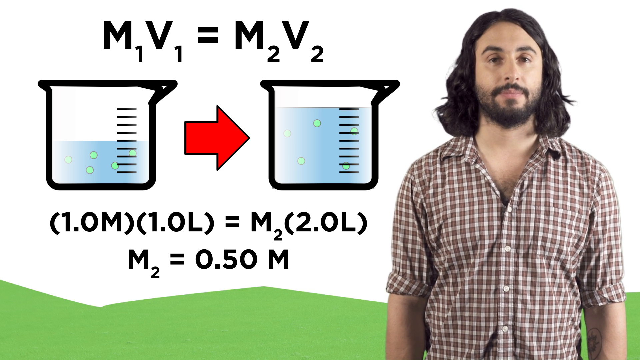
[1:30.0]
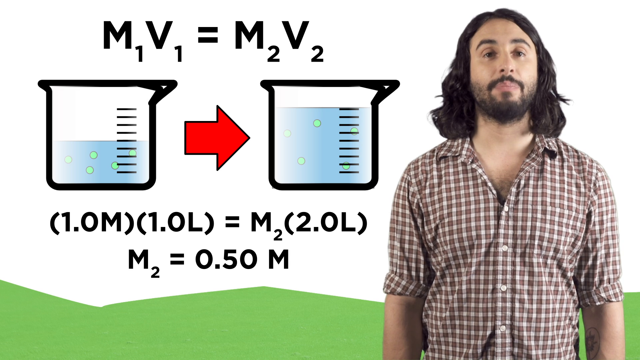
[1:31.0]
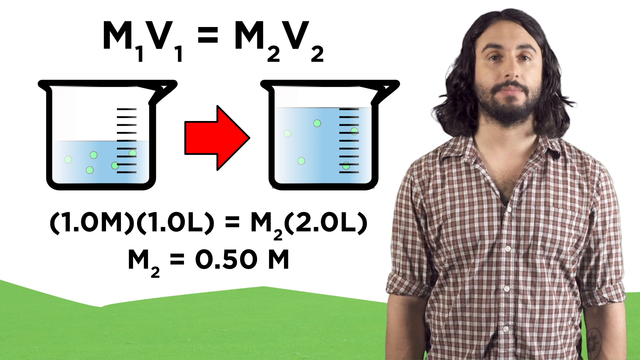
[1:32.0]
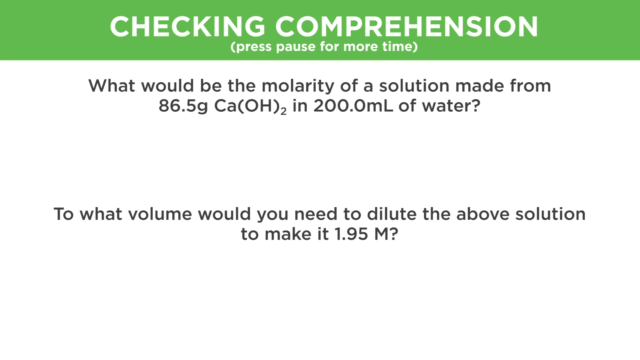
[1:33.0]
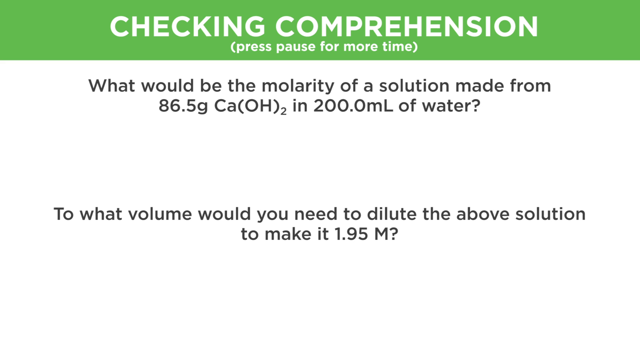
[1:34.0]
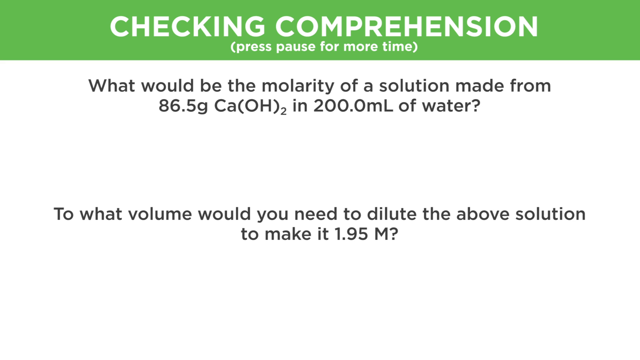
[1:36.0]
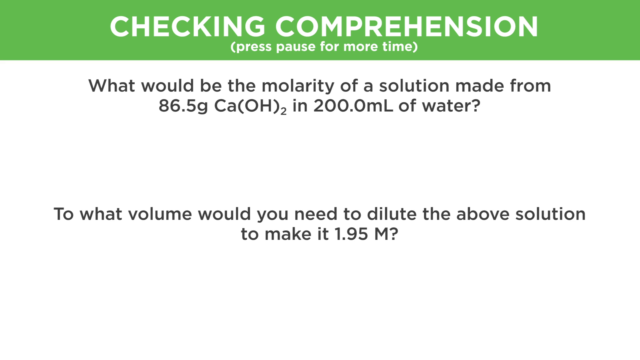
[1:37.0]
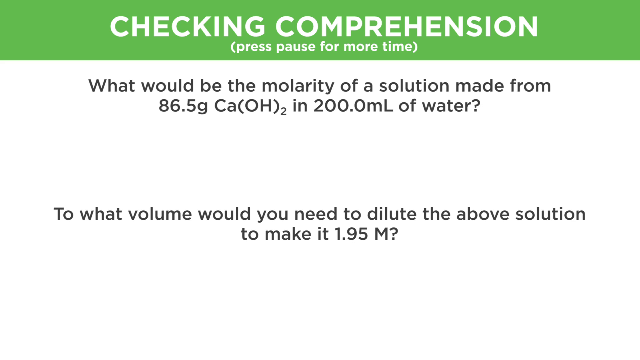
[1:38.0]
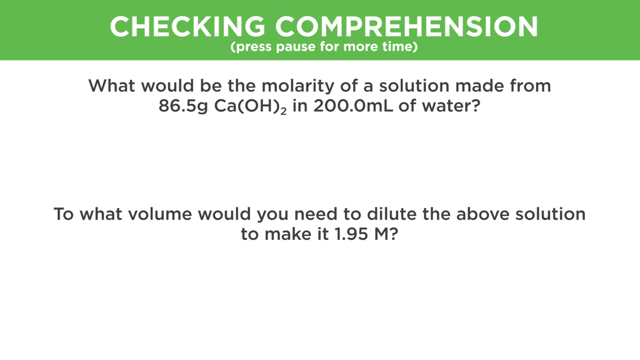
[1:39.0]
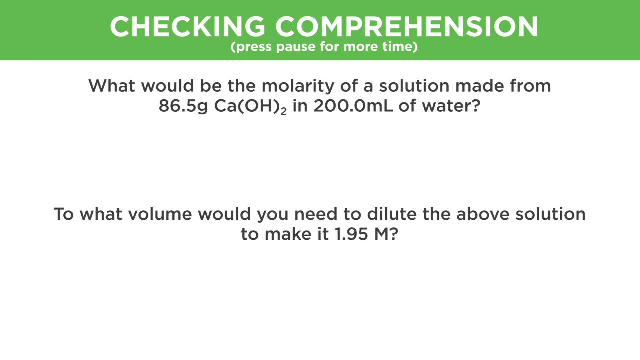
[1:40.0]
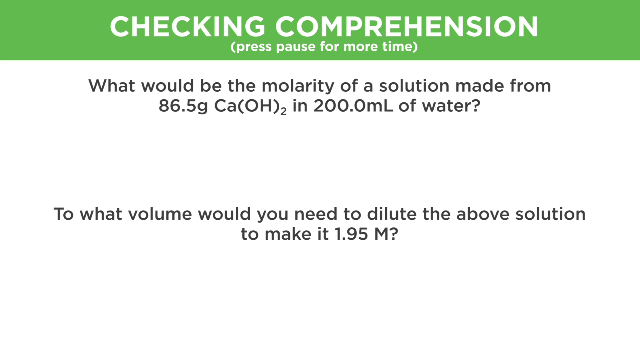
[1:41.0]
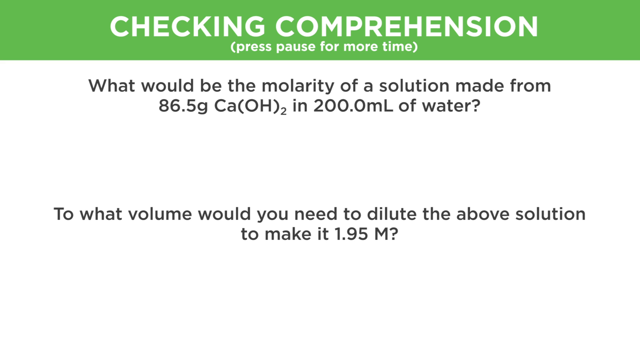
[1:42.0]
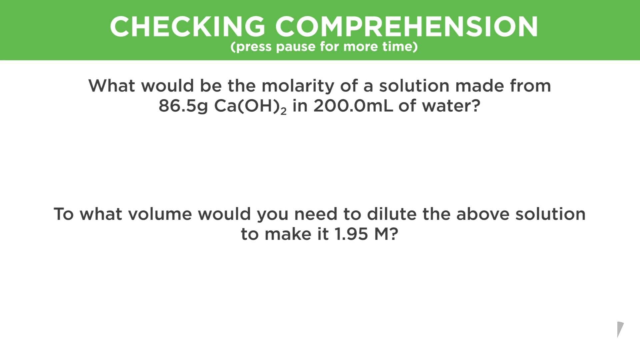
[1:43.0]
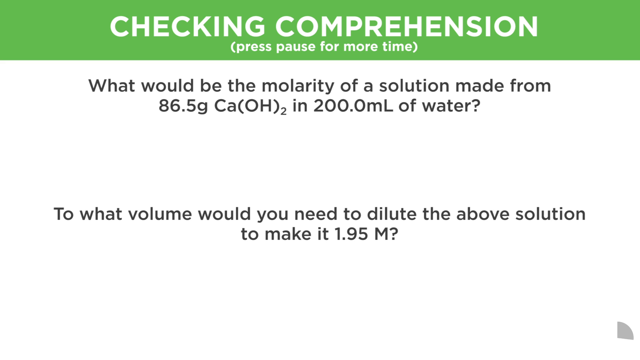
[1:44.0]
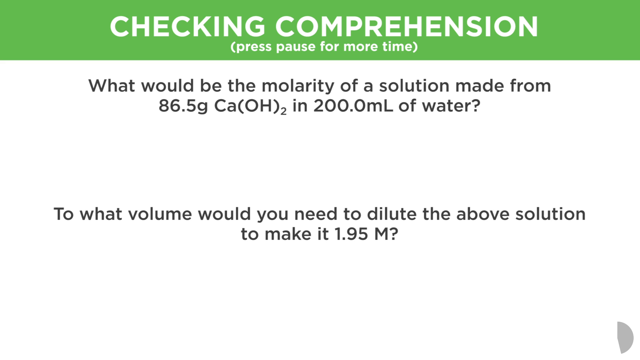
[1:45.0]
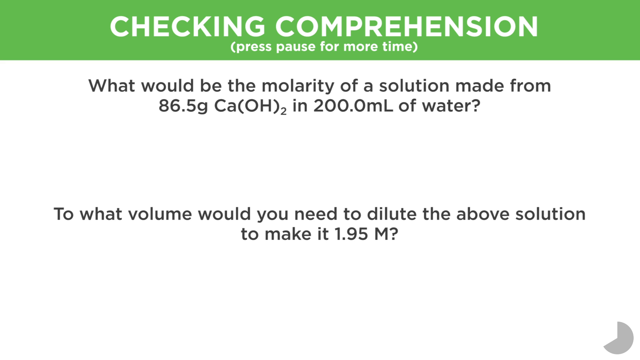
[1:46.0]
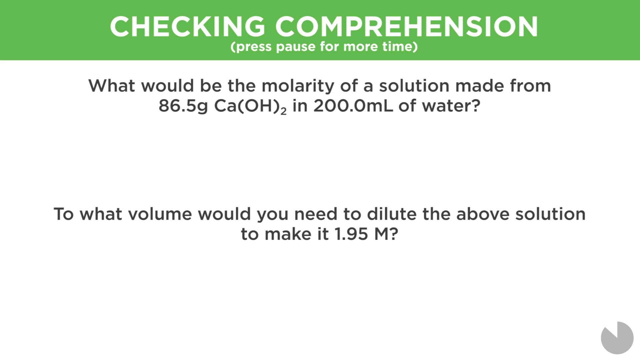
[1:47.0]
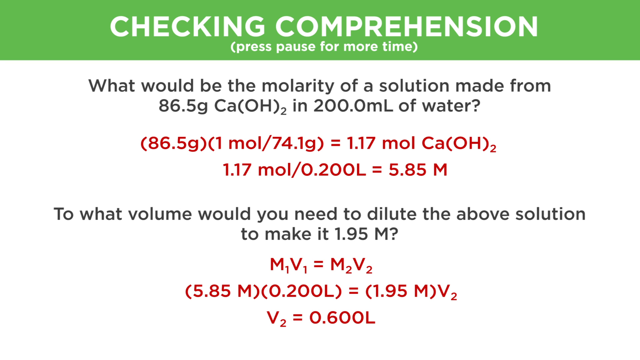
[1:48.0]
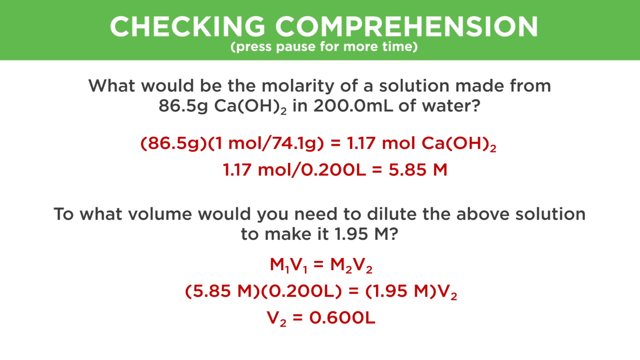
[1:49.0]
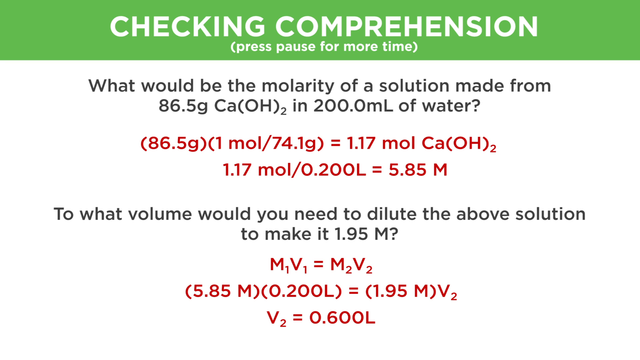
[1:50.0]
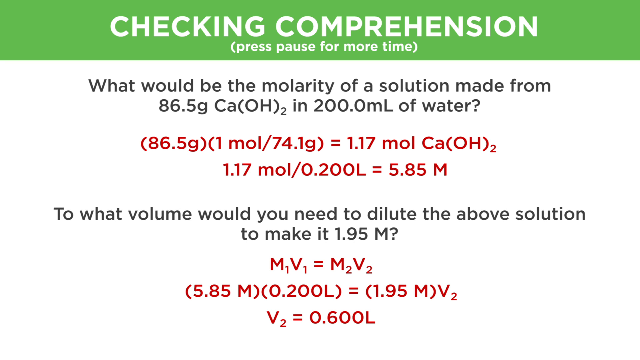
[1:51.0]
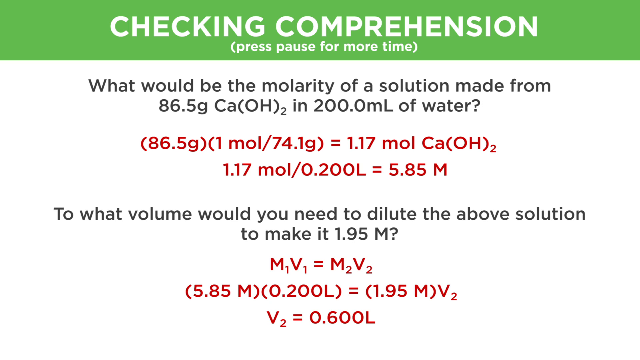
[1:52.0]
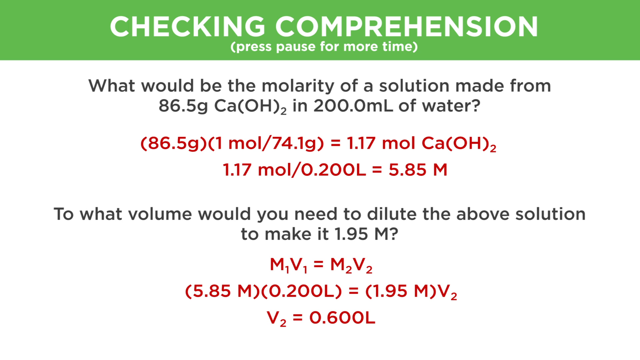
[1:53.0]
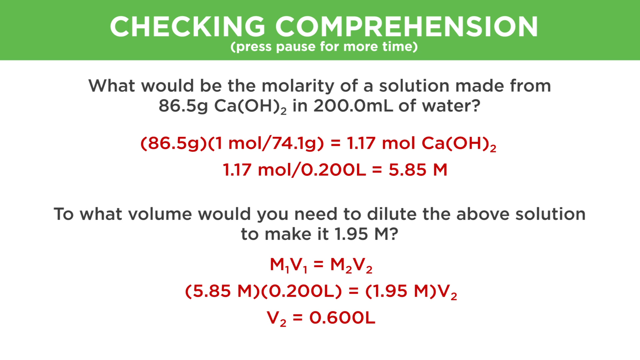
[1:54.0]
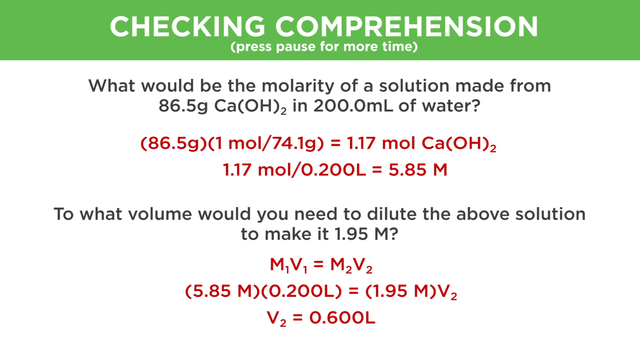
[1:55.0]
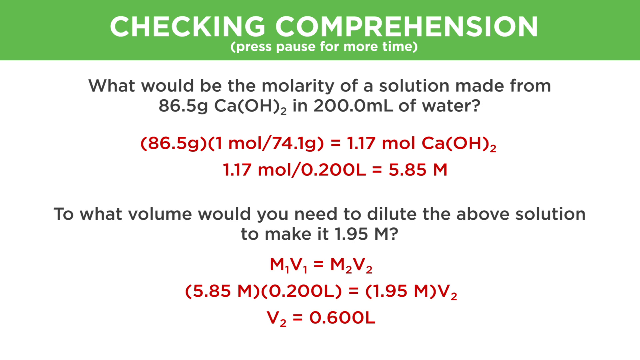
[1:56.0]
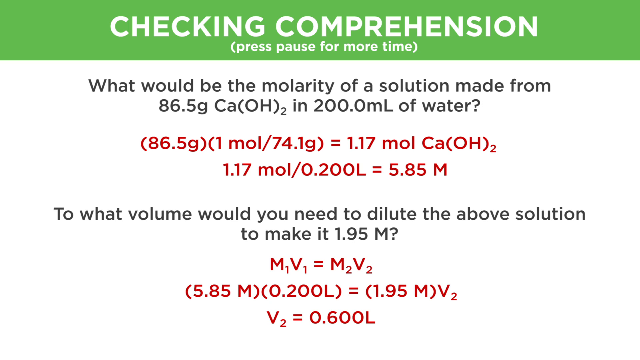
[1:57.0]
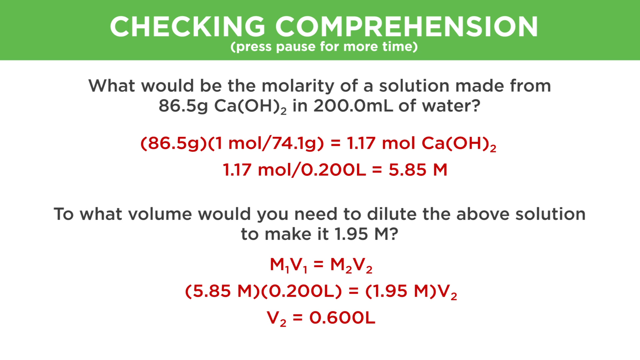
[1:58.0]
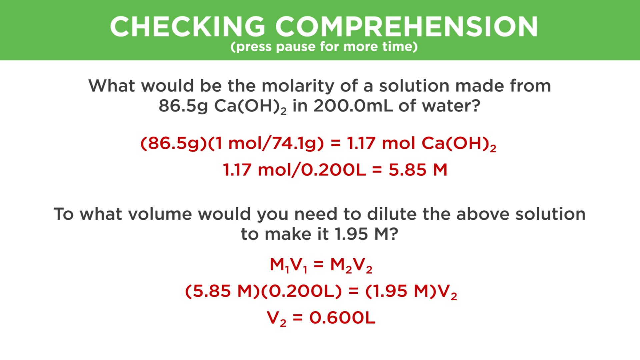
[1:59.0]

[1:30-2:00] A man on the right side, seen from the stomach up, wears a brown and white plaid button-up shirt; he looks to be in his 30s and has long black hair down to his neck and a black beard. On the left side of the screen are drawings of two beakers in a row, with a red arrow between them pointing to the right beaker. Both beakers have about 10 measuring lines on their right side. The left beaker is filled to the halfway point with blue water containing about five small green circles; the right beaker is filled to the top marker, with about four green circles, or bubbles, floating in the blue water. At the top of the screen is the equation "M1V1 = M2V2", with subscripts. Beneath the beakers are two lines of equations: "(1.0m)(1.0l) = M2(2.0l)" and, below it, "M2 = 0.50m". The background is white, with a slightly hilly green border at the bottom. The video then moves to a mostly white slide with a green border at the top containing the words "checking comprehension" in white, and beneath it "(press pause for more time)". Below the green border, at the top of the white section, is the question "what would be the molarity of a solution made from 86.5g Ca(OH)2 in 200.0mL of water". At the bottom is another question: "to what volume would you need to dilute the above solution to make it 1.95m?", with space below it. The slide stays on screen for several seconds. In the bottom right, what looks like a sliver of a pie chart appears, grows fuller and fuller, spins around, and eventually becomes a full gray circle. The answers to the questions then appear in red. Under the first question: "(86.5g)(1mol/74.1g) = 1.17mol Ca(OH)2" and below it "1.17mol/0.200l = 5.85m". Under the second question: "M1V1 = M2V2", then "(5.85m)(0.200l) = (1.95m)V2", then "V2 = 0.600l". The answers remain on screen for some time.